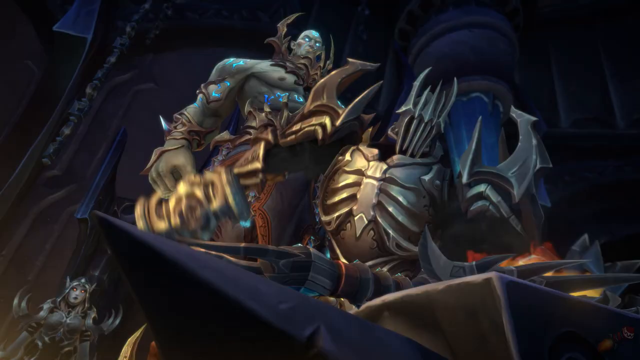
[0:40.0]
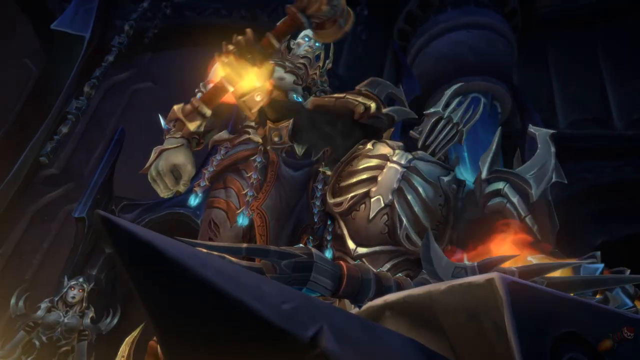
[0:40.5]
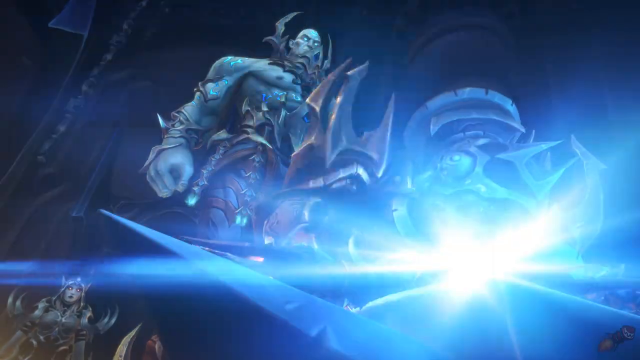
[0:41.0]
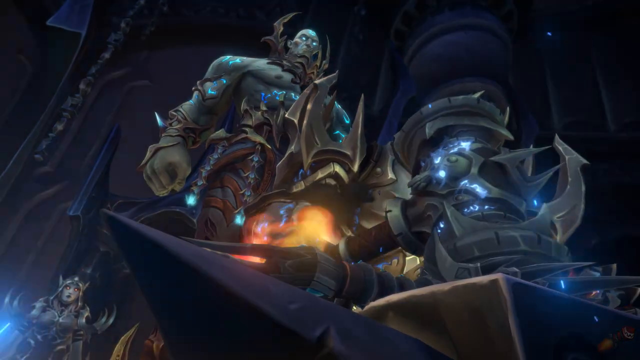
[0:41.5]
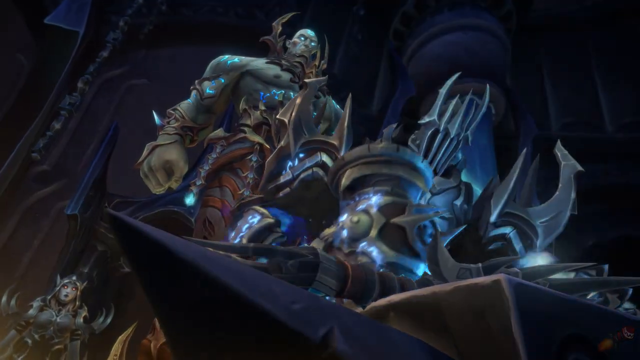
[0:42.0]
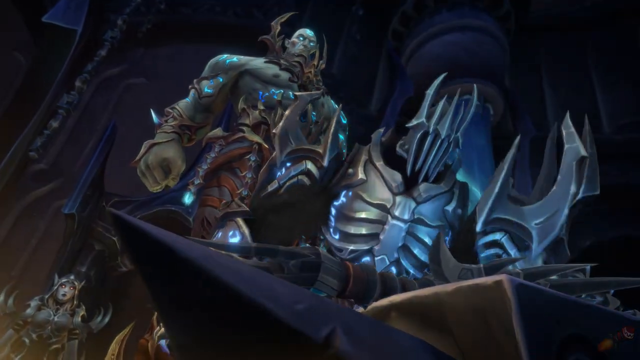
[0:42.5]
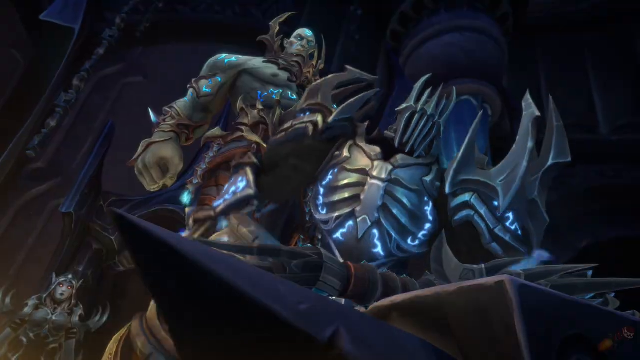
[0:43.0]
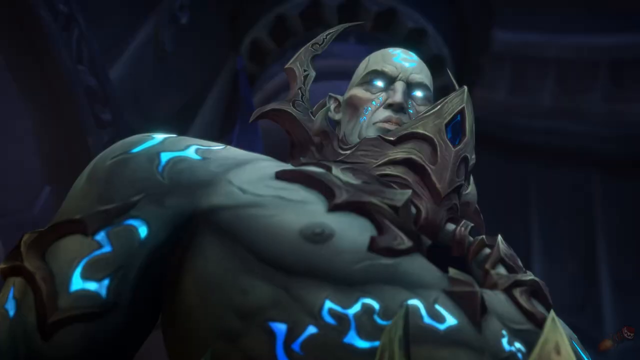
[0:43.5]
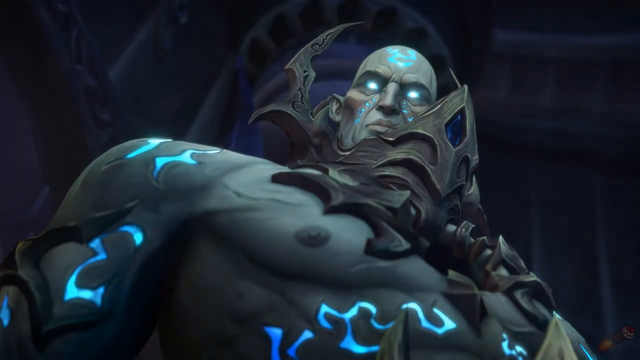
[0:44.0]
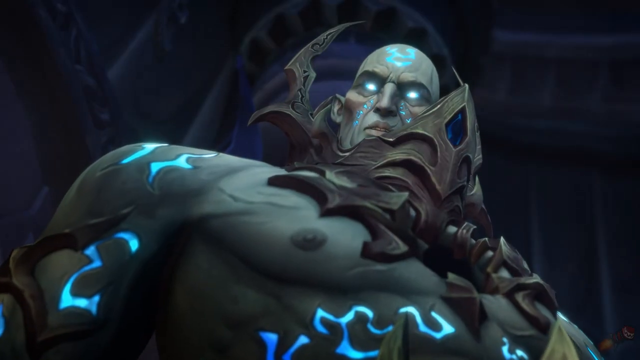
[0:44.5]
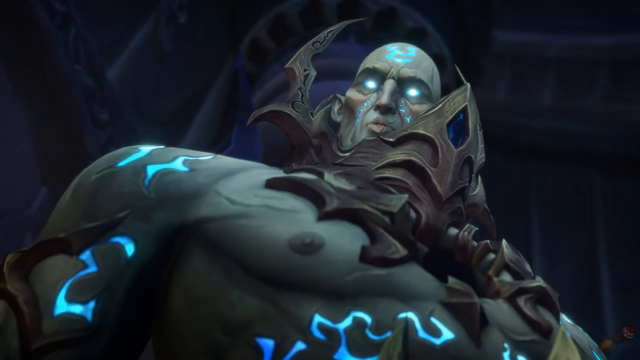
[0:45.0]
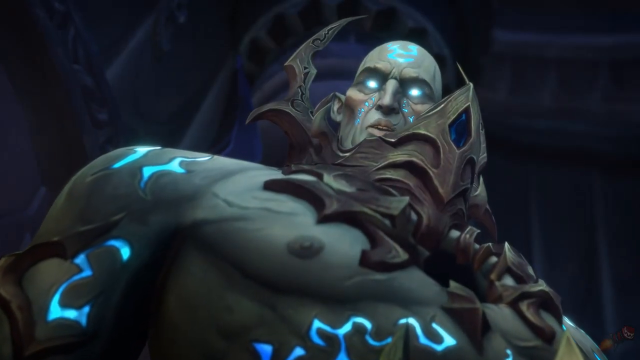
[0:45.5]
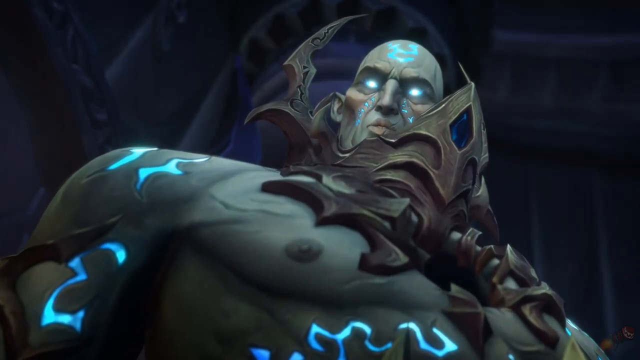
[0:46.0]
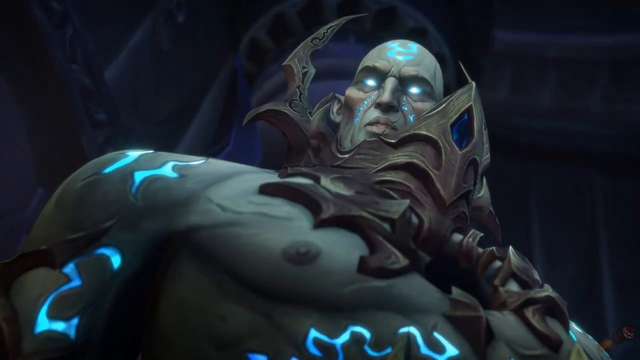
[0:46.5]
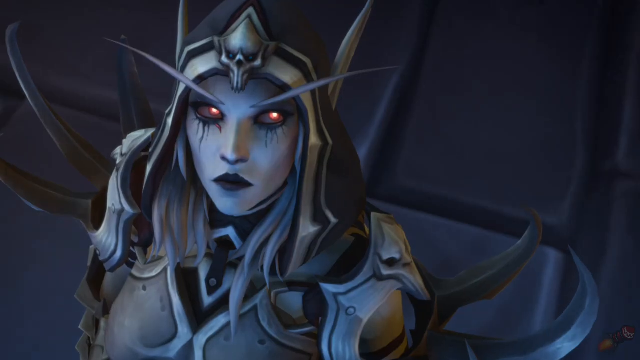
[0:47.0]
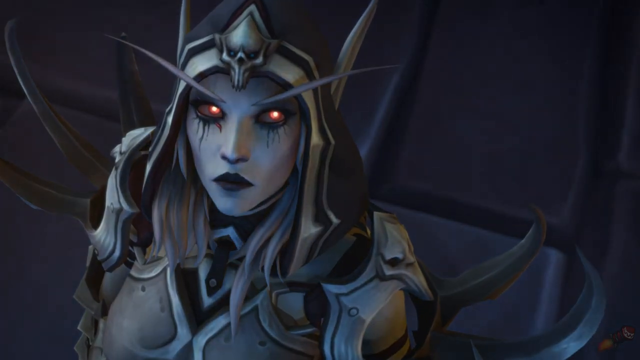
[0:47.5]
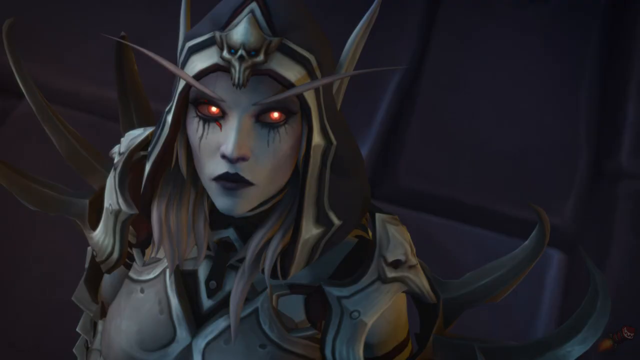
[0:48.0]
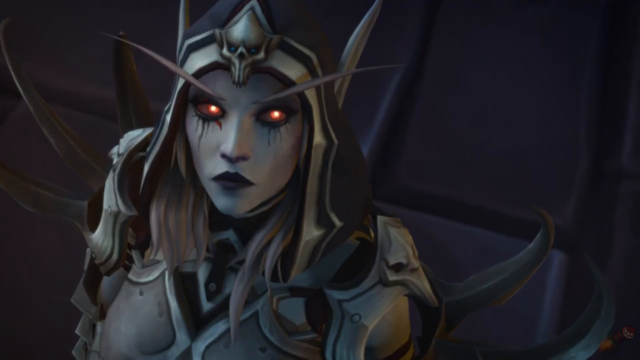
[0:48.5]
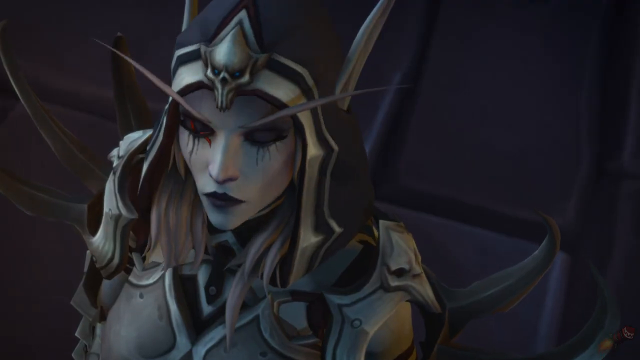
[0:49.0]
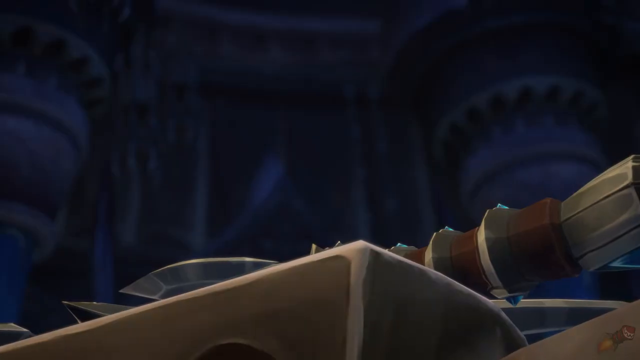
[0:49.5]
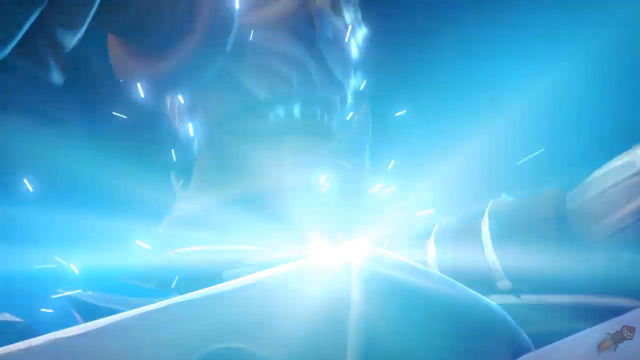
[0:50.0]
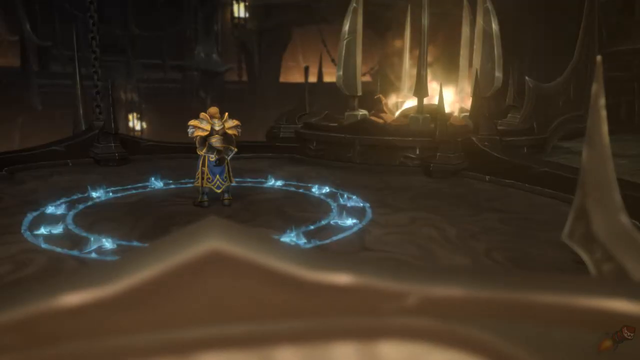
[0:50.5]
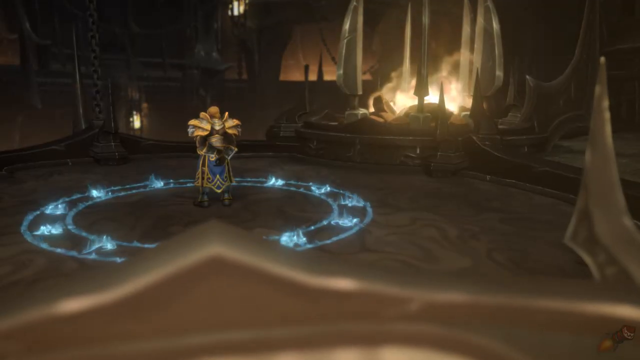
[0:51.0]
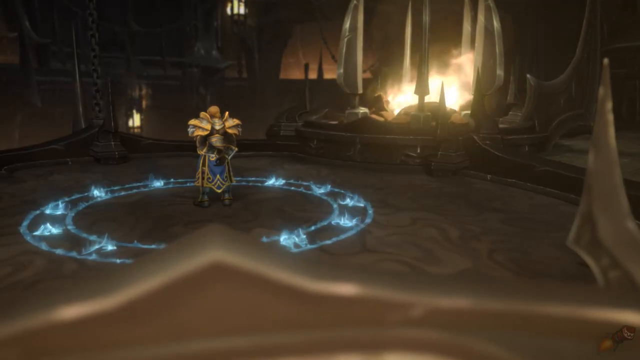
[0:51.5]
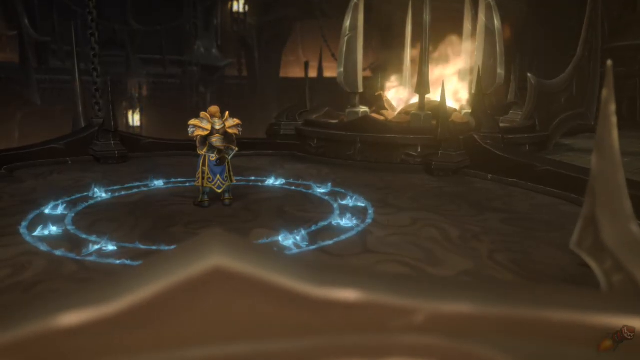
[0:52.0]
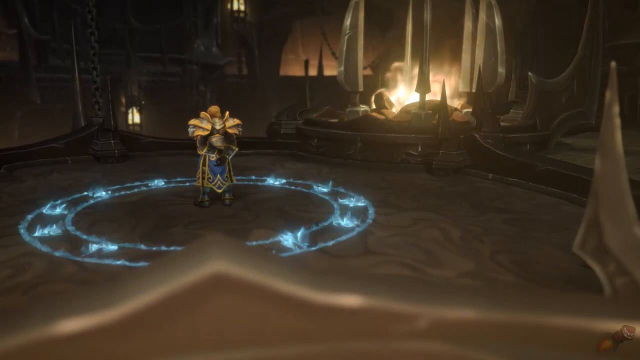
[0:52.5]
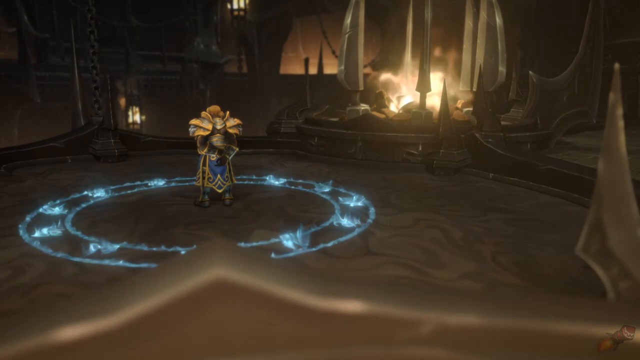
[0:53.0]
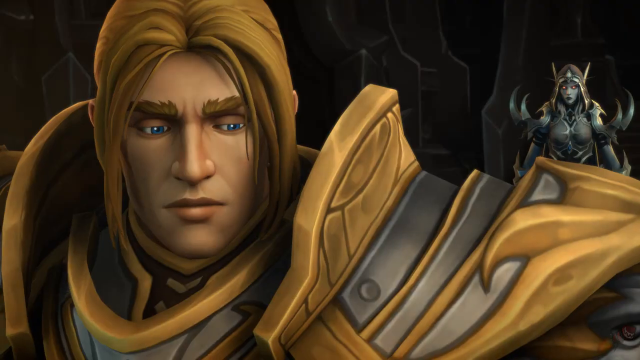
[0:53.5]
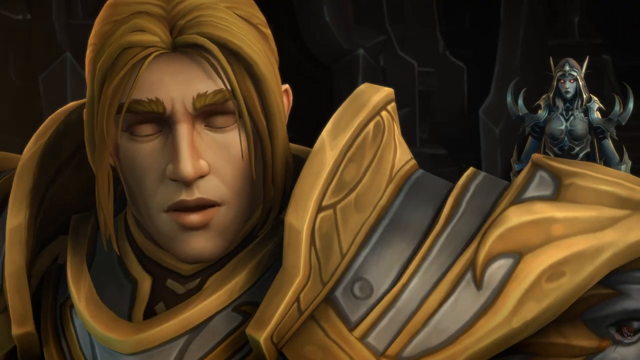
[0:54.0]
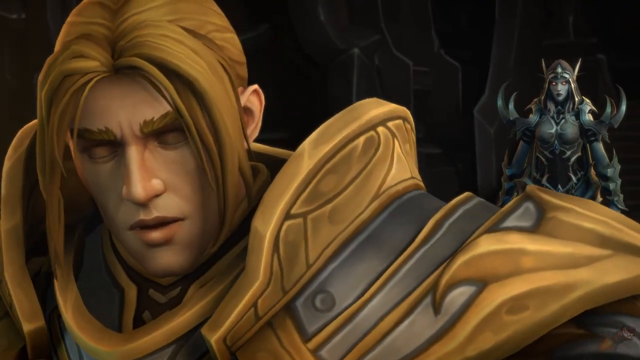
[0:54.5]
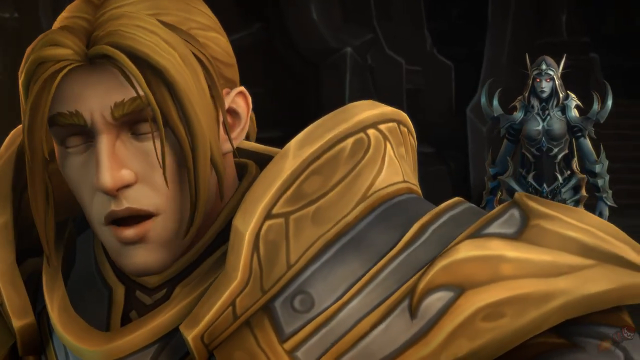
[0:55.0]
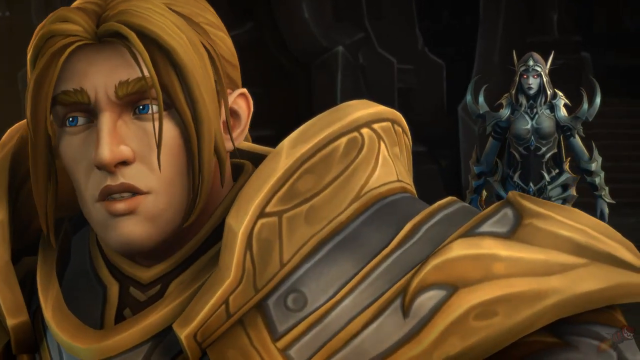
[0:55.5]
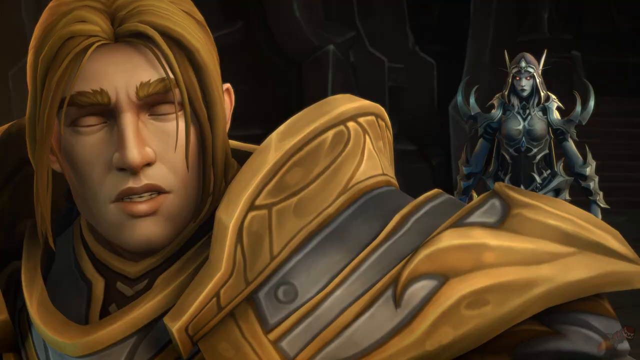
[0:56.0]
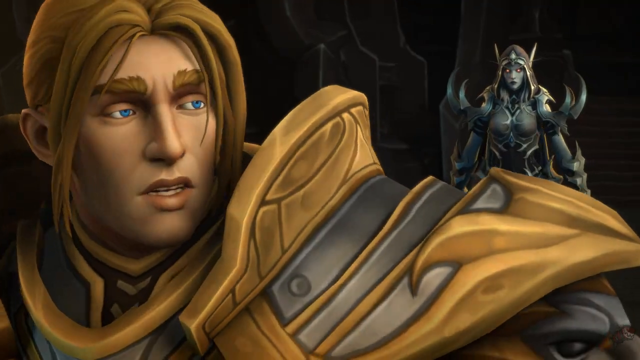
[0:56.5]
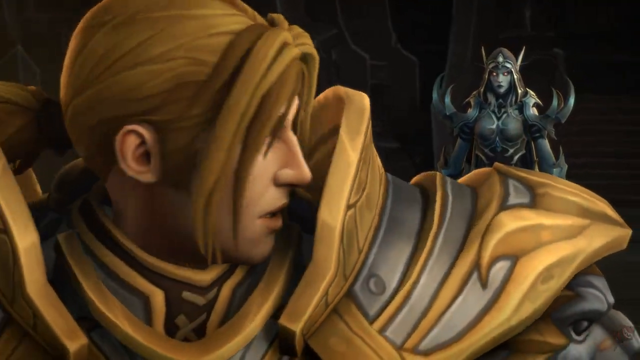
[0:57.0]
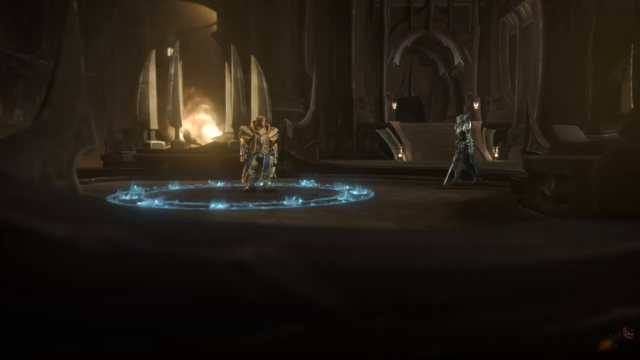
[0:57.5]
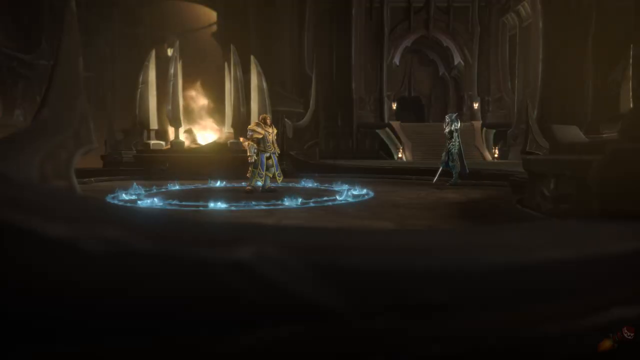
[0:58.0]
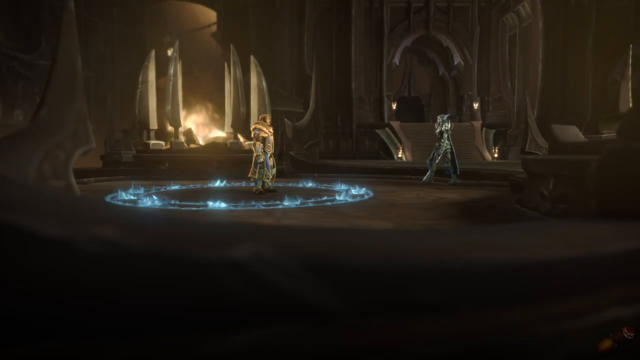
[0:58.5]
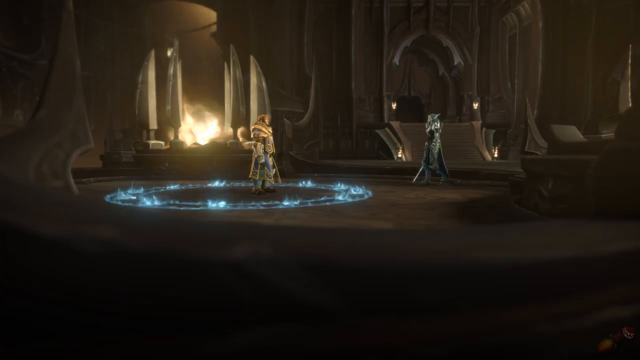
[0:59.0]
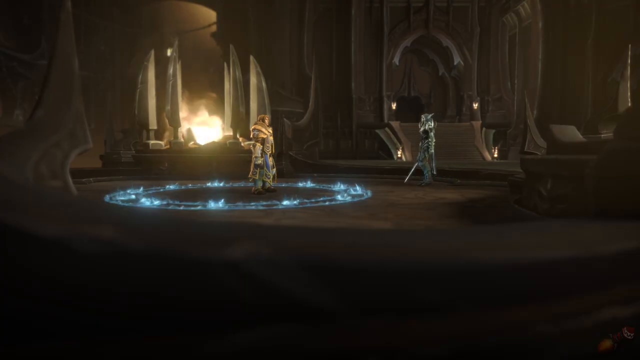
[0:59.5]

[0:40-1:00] Many video game characters in one area fight against each other, trying to hit, whack and kill each other. Many of them look magical, like monsters. One of the main characters in the scene looks like a blue ogre with blue flashing eyes and looks dangerous and scary.